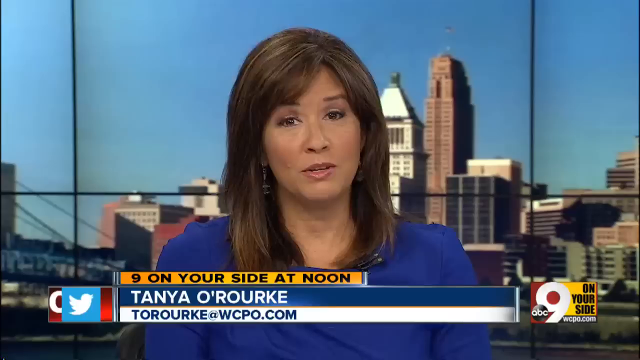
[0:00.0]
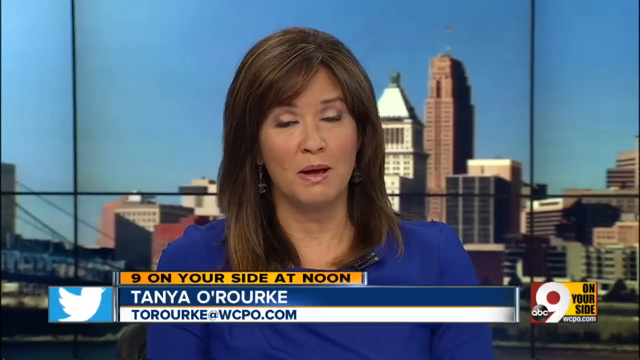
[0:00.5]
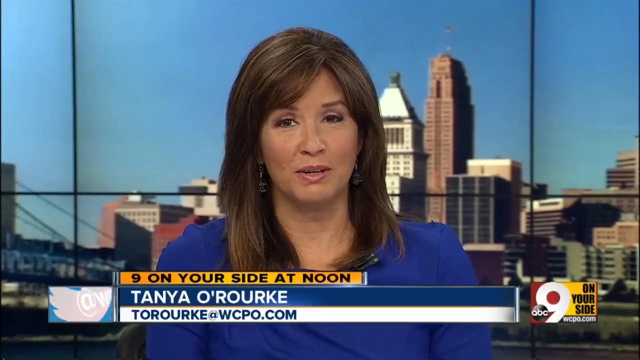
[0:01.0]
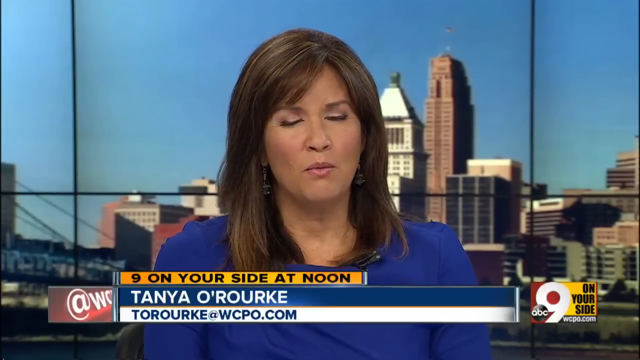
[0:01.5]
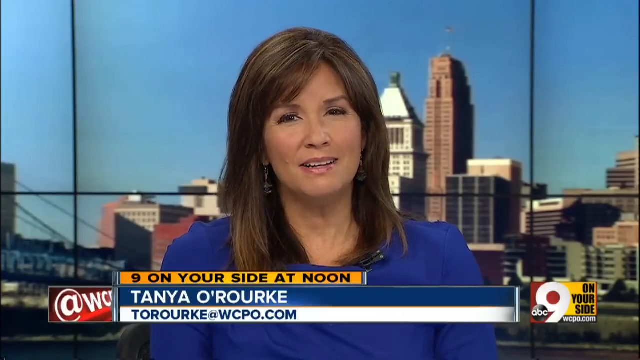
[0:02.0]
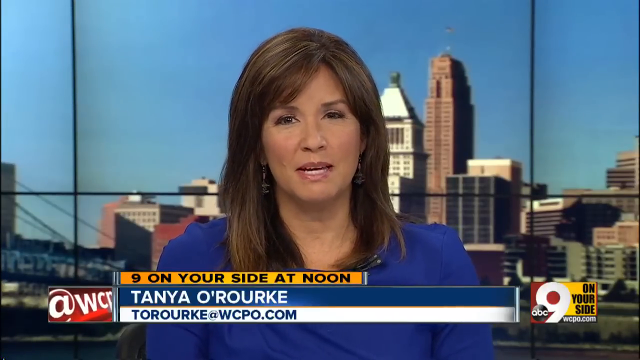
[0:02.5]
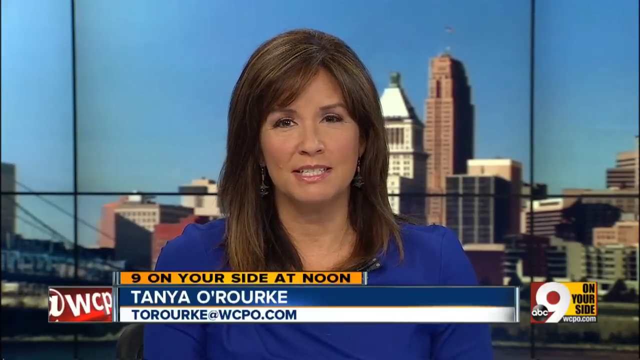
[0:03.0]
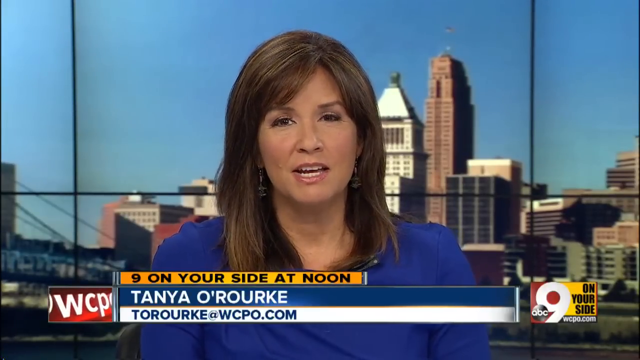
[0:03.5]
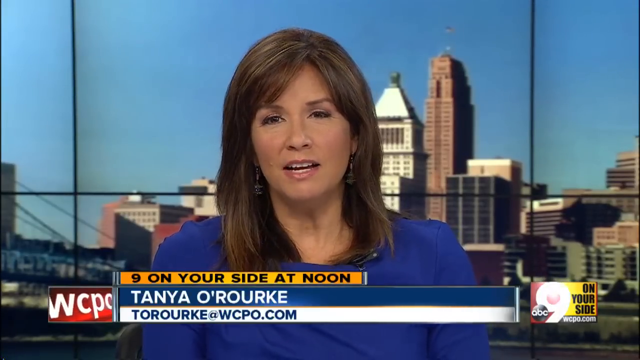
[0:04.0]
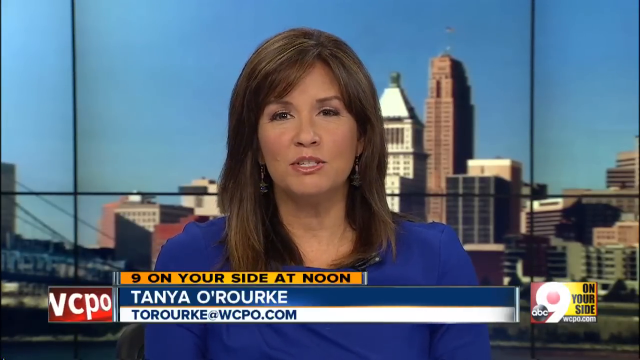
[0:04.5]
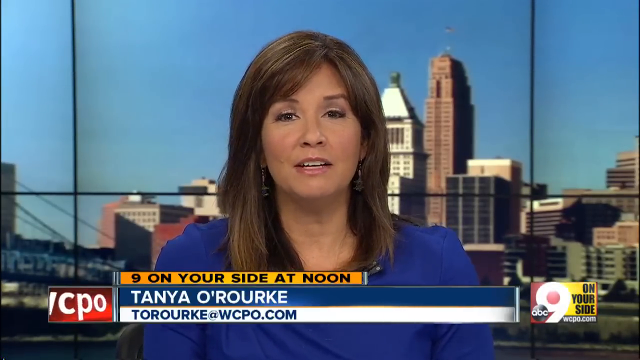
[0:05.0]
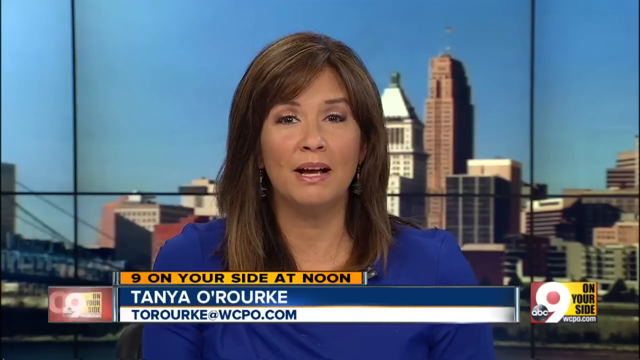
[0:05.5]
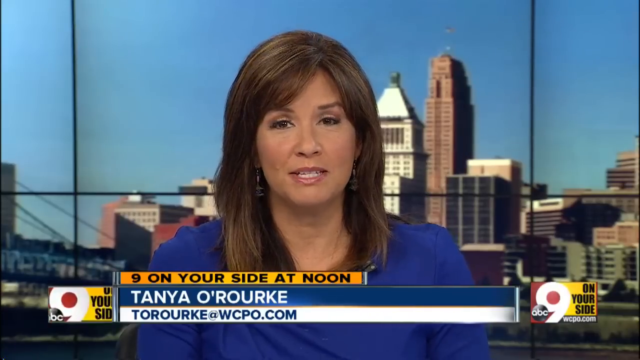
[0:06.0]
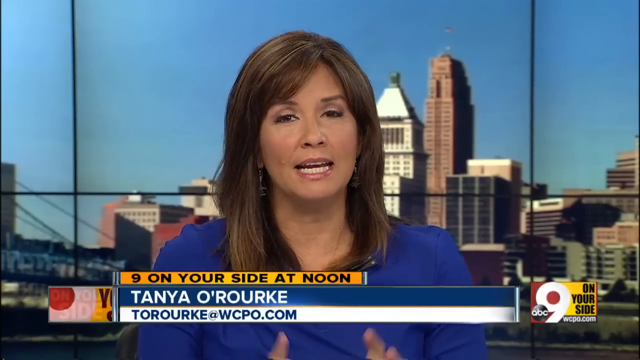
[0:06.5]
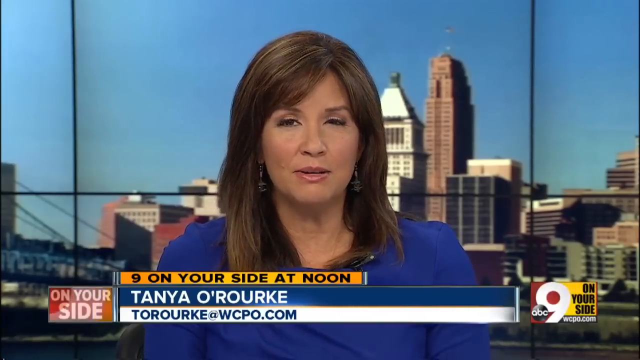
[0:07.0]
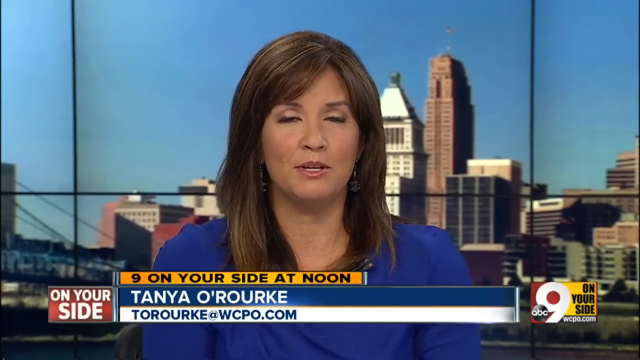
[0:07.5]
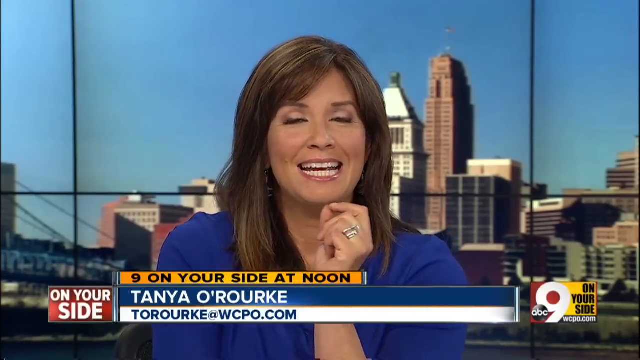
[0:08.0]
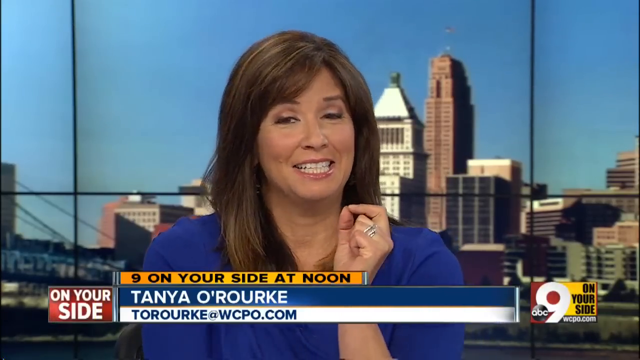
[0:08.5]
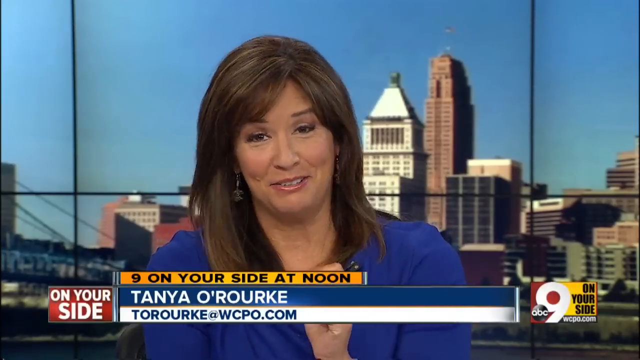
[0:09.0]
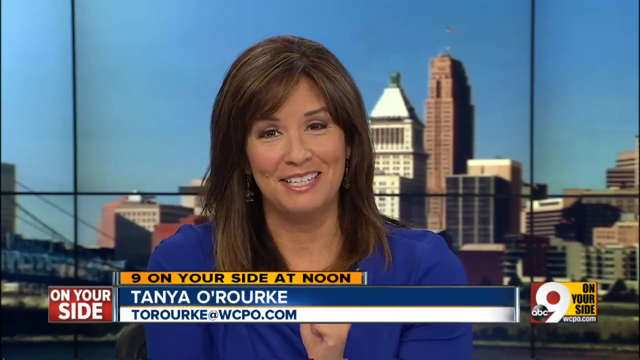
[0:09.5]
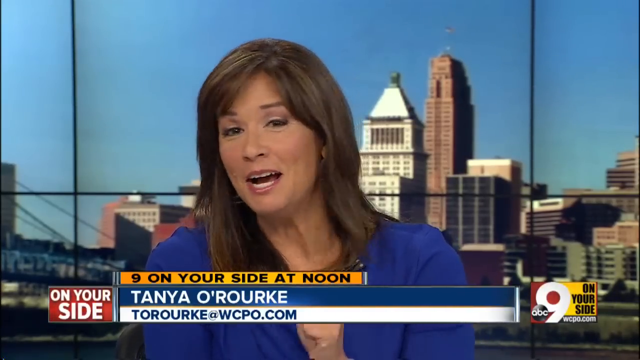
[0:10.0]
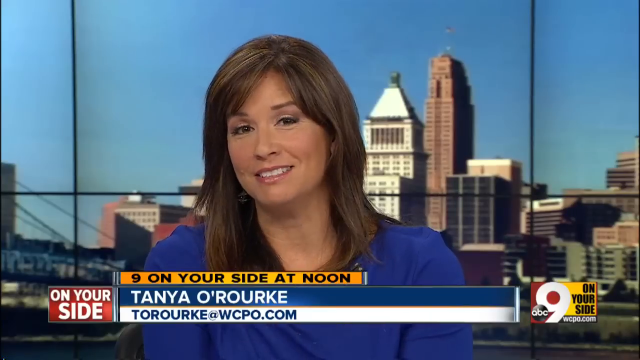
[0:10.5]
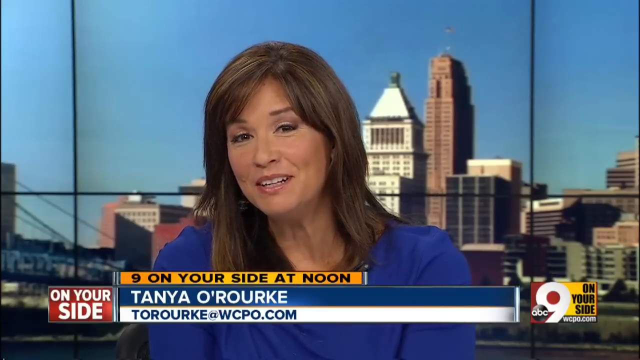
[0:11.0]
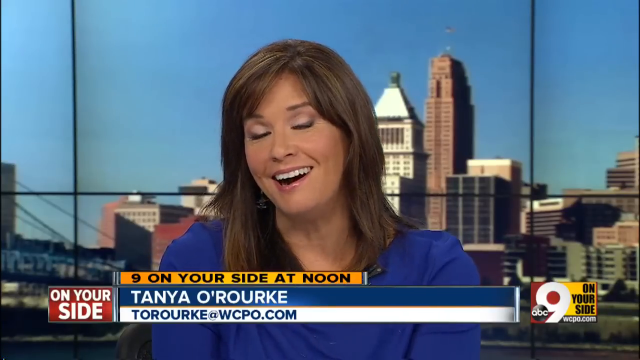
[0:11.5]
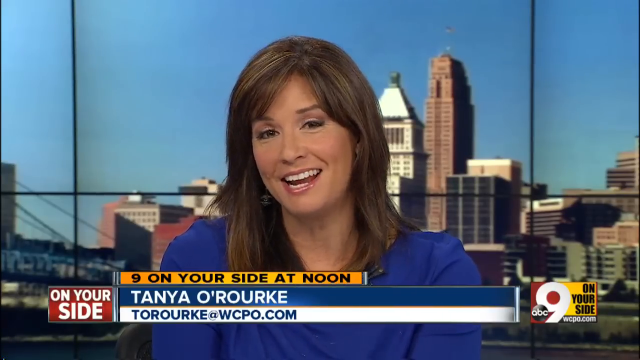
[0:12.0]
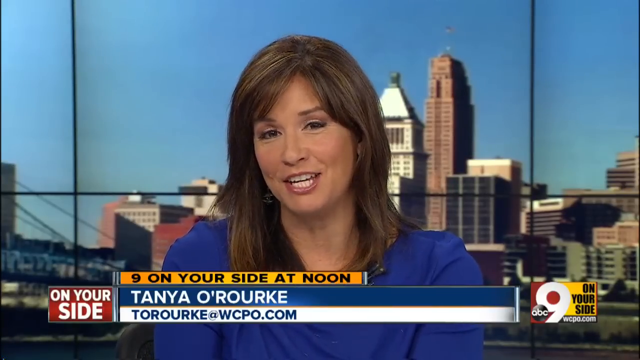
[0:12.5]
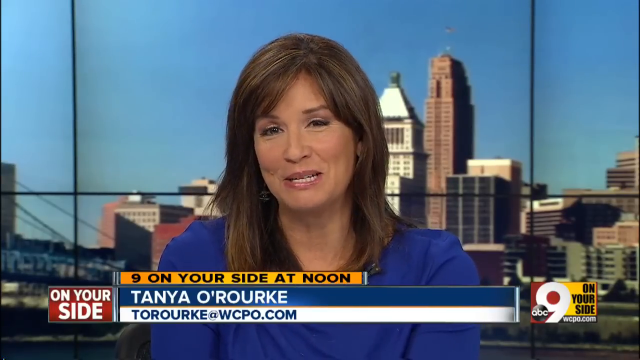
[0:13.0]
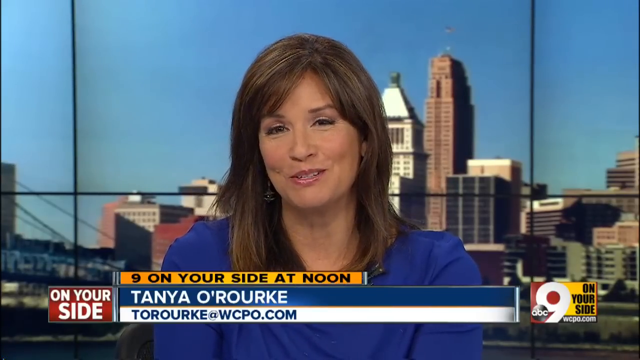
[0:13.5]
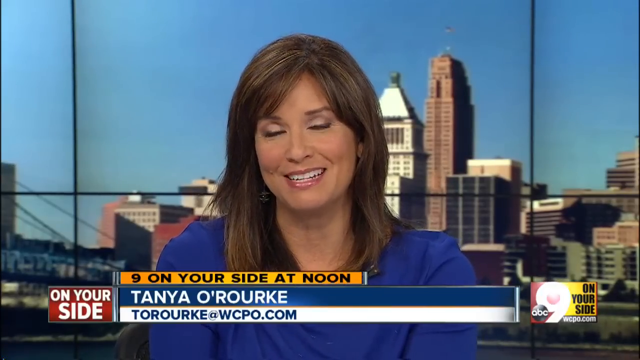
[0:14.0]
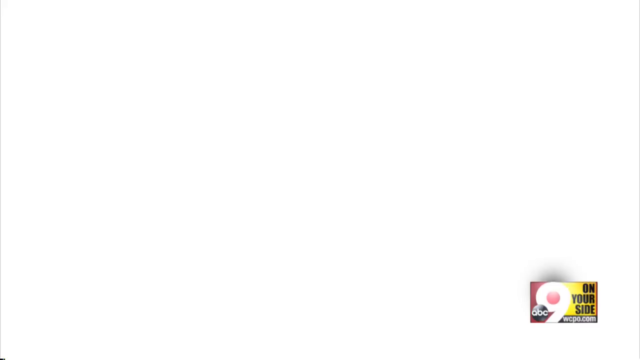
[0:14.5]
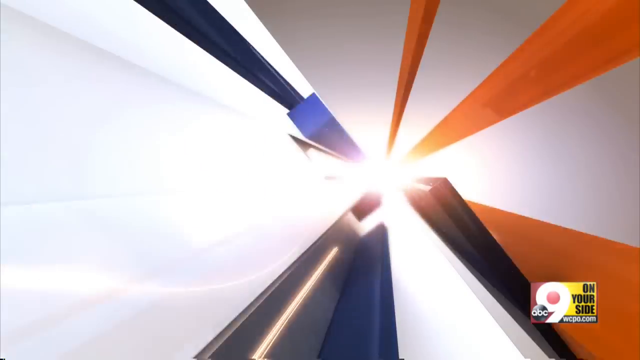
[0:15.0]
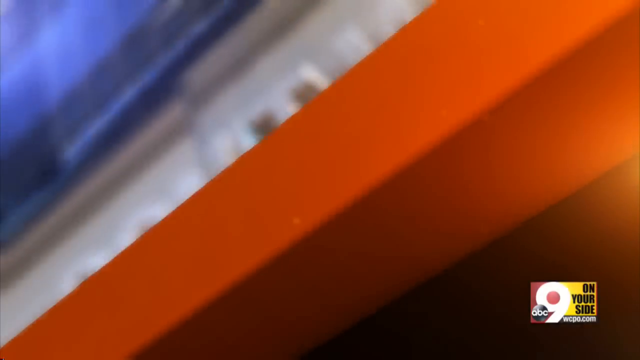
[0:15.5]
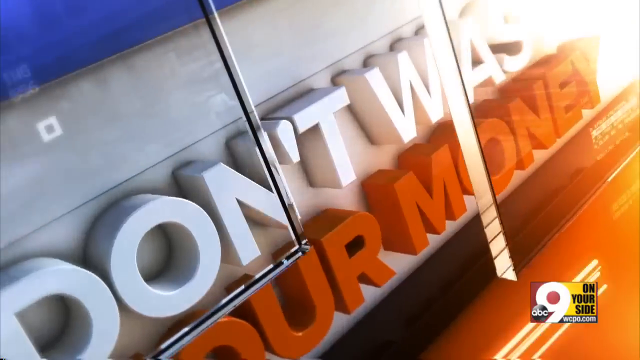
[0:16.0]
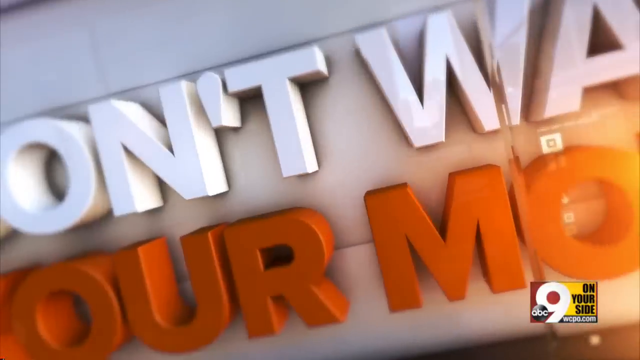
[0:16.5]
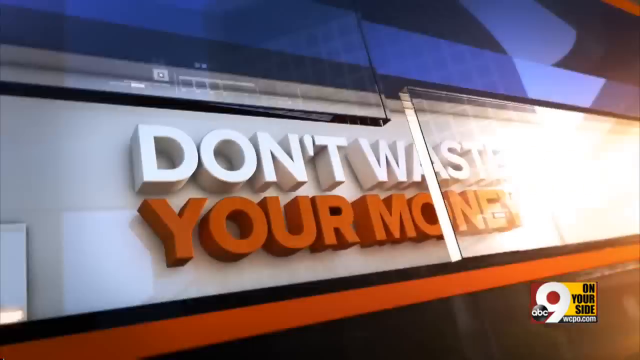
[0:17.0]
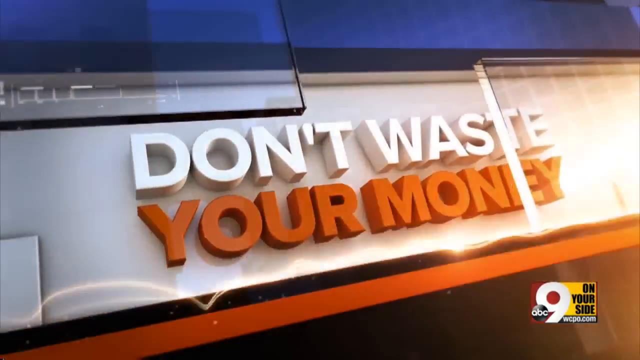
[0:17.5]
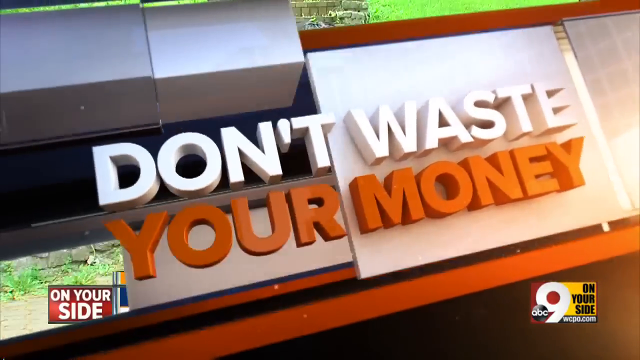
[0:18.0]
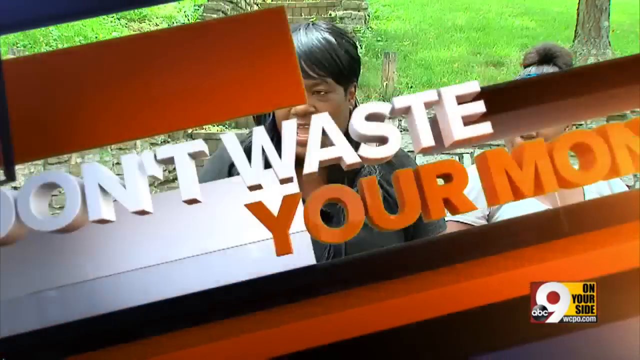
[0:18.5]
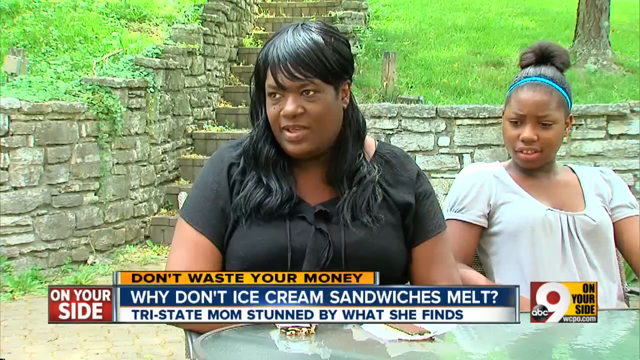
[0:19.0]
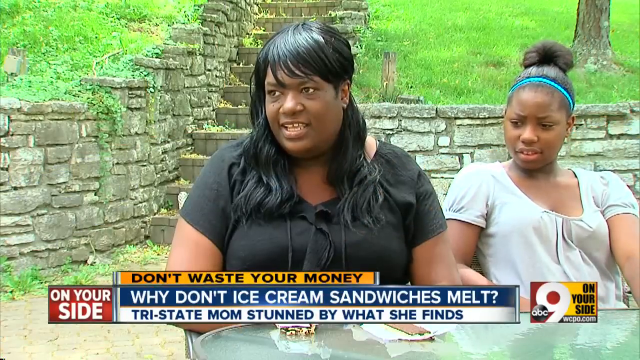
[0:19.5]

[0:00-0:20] A news program begins. A small graphic at the bottom of the screen reads "Nine, On Your Side at Noon." The anchor is a woman who looks to be in her 40s and appears Hispanic; the graphic gives her name as "Tanya O'Rourke." Behind her is a graphic of a city, an urban environment with a blue sky and many buildings. She talks as a news anchor, smiling, with very white teeth and tan skin. On-screen text indicates "Channel 9 ABC, On Your Side." A graphic then splashes across the screen reading "Don't Waste Your Money" in white 3D text on a background that is kind of orange. The shot opens on an African American woman and an African American girl sitting on a bench; they appear to be being interviewed for the news.